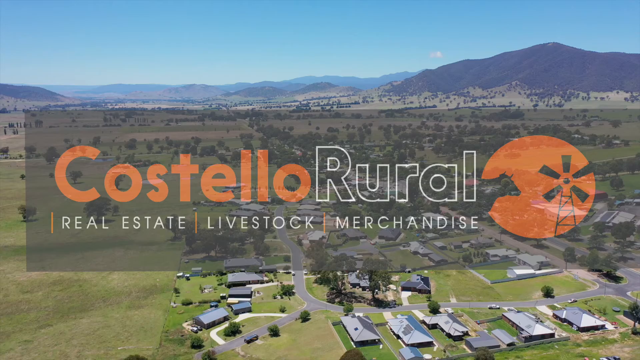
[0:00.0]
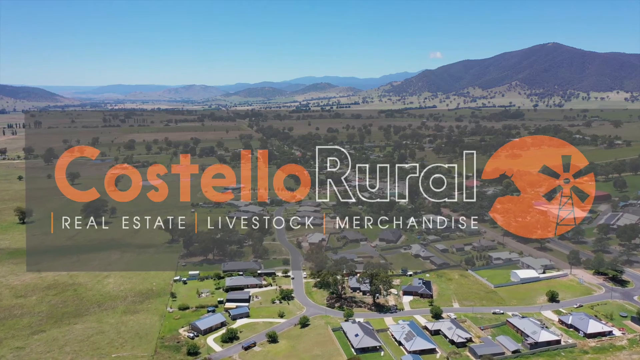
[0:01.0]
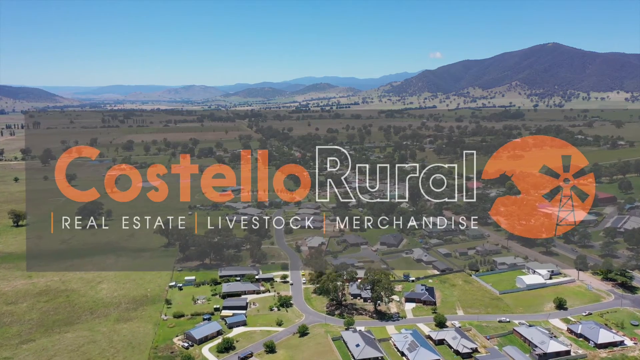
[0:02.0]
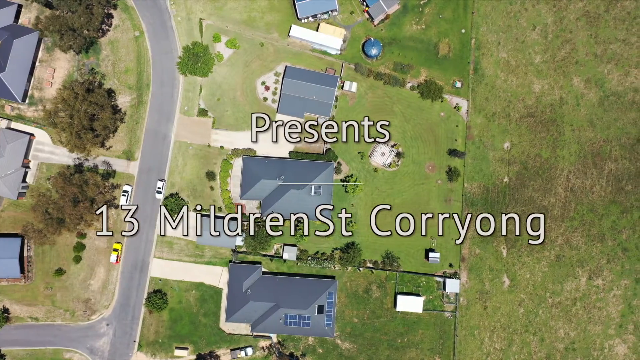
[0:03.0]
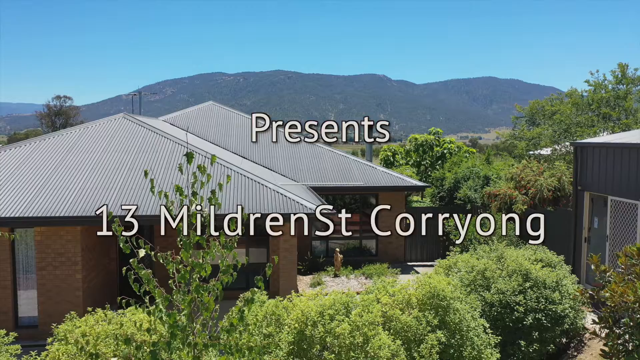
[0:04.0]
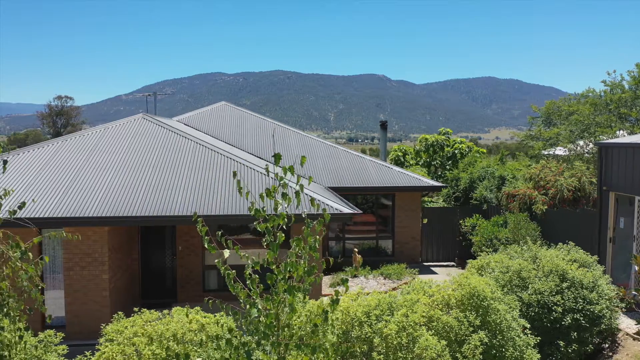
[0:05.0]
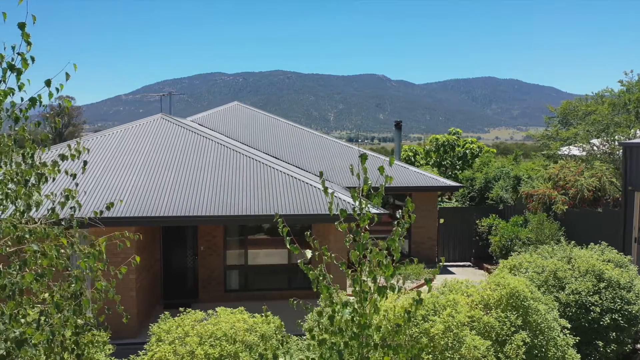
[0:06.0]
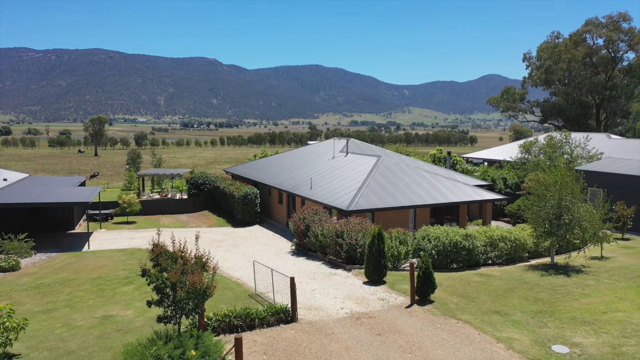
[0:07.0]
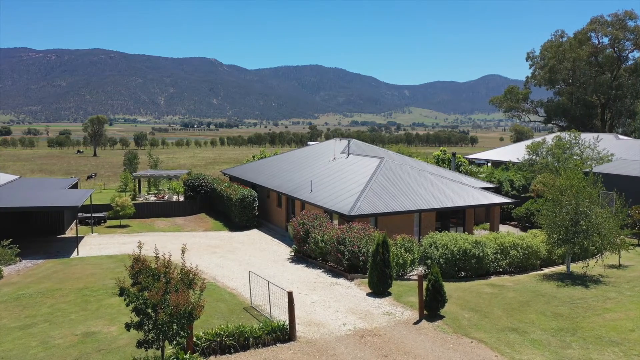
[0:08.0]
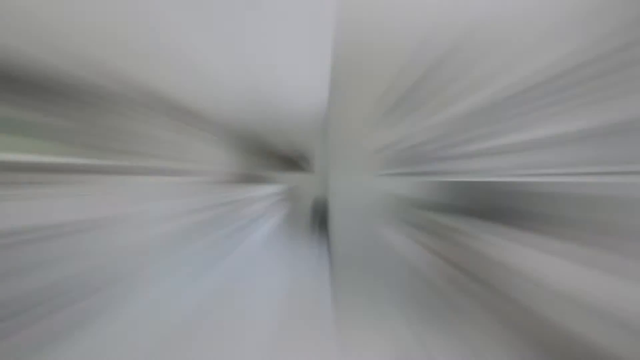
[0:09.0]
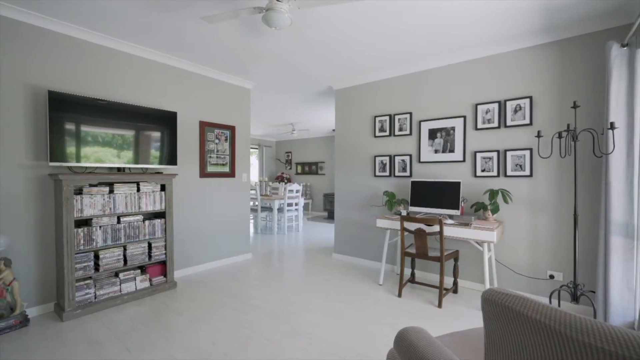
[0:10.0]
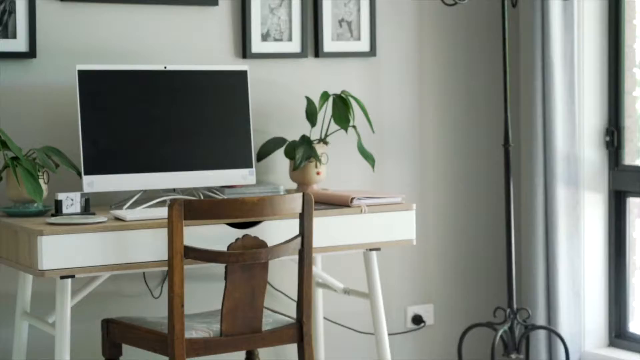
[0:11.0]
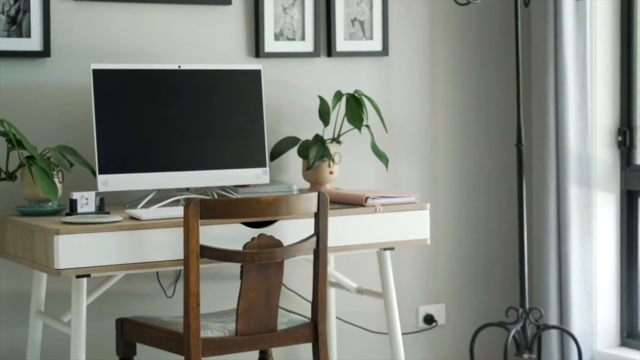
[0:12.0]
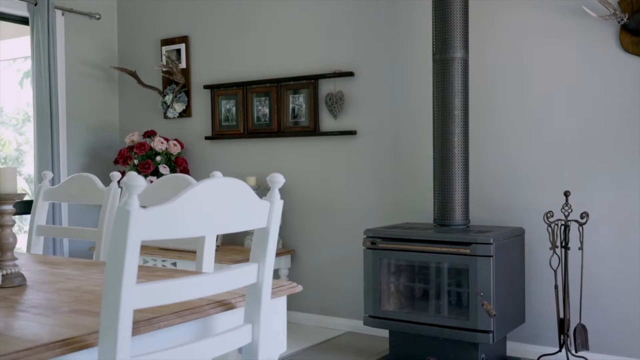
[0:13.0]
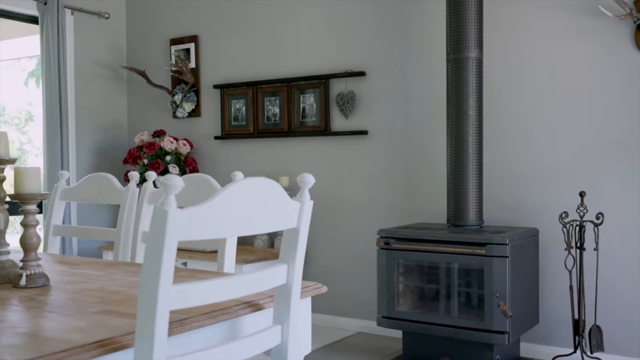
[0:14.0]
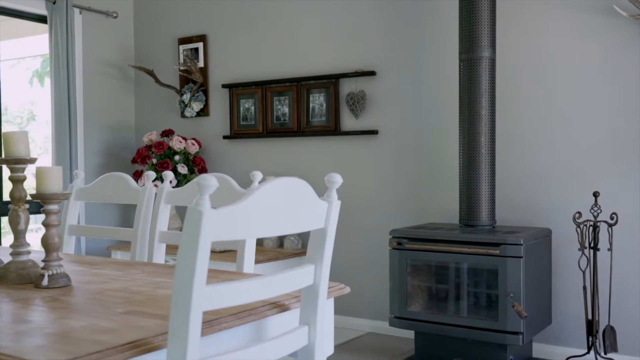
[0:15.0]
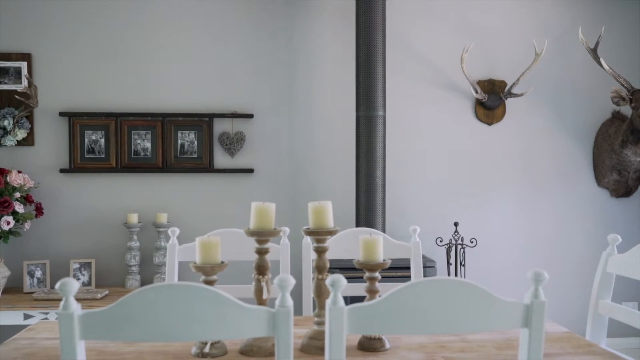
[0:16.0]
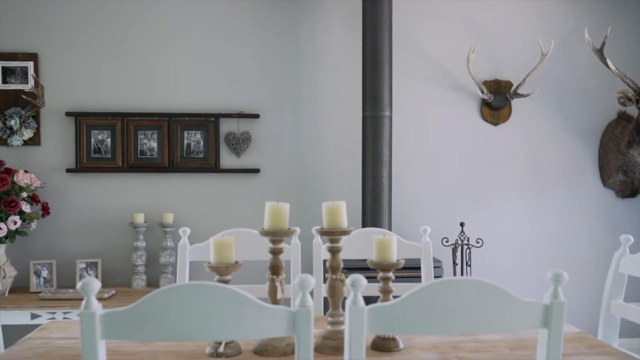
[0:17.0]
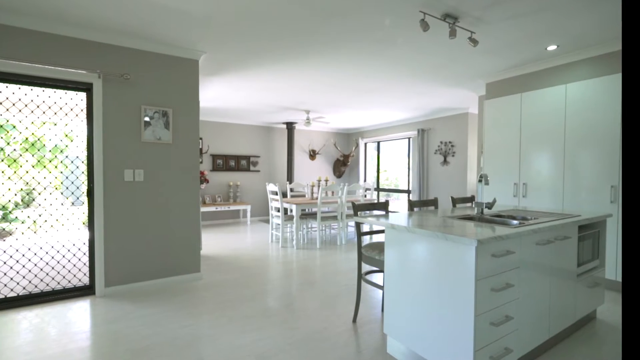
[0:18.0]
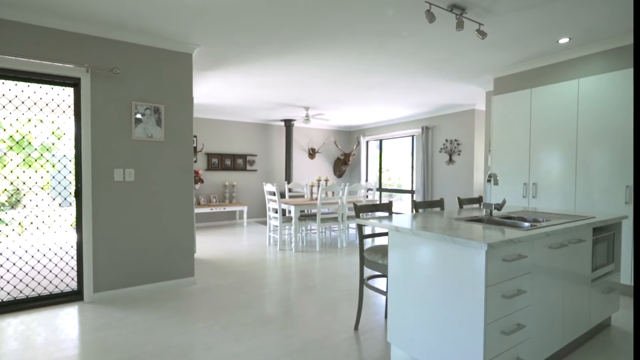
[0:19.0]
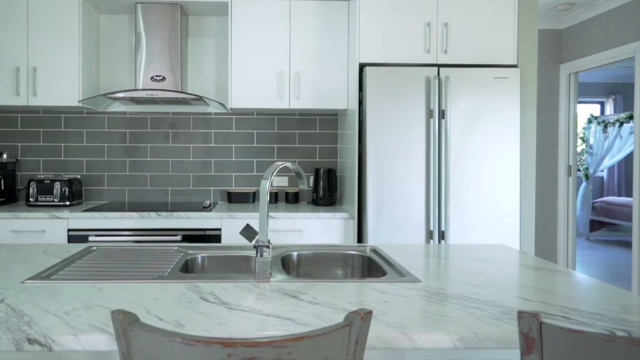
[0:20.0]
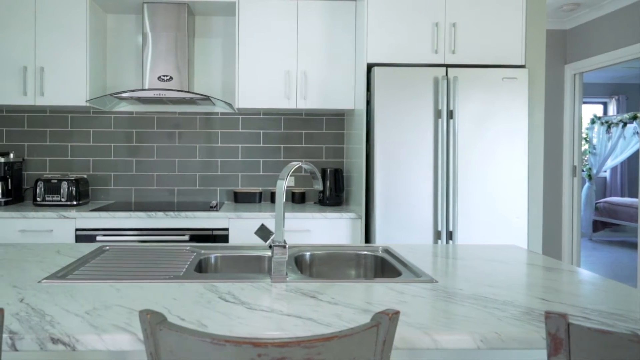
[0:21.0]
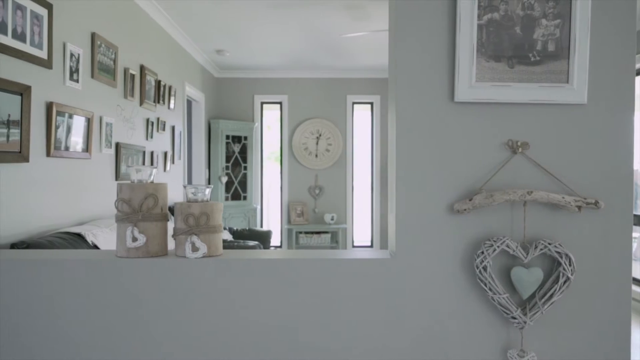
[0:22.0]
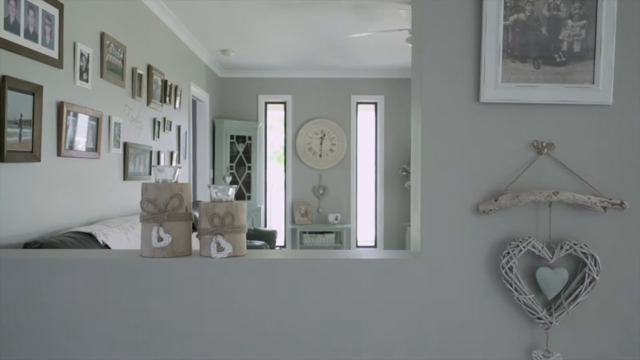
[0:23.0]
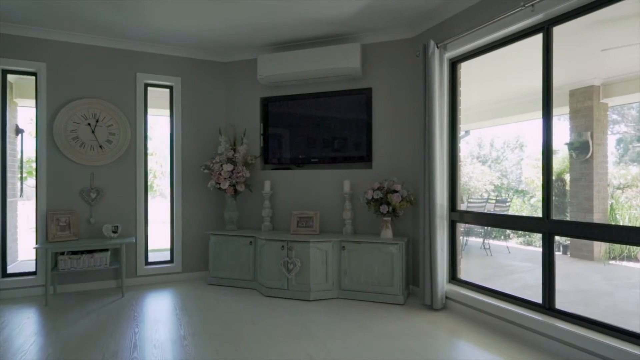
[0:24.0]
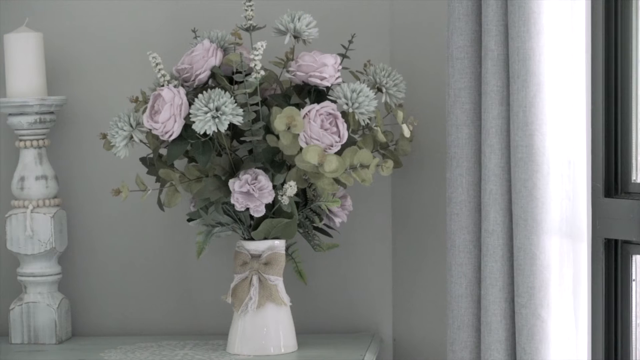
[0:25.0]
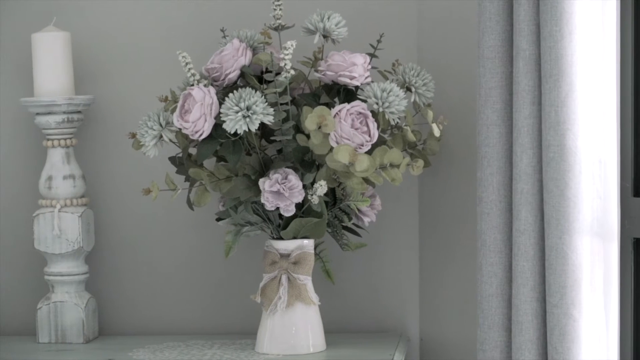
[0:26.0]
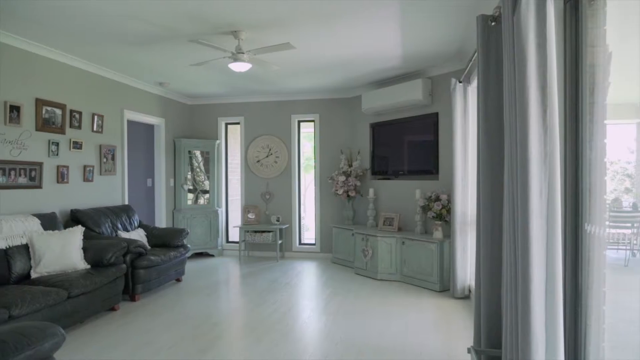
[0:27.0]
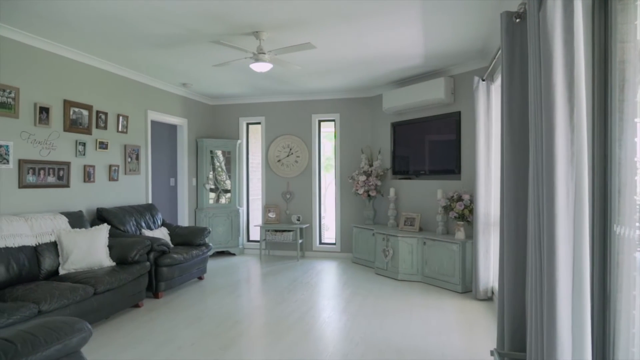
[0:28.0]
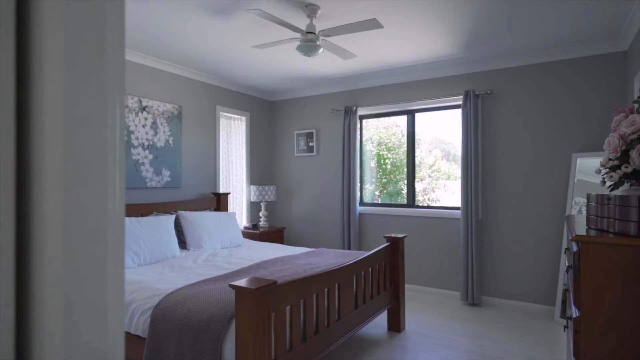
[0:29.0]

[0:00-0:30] The video opens with the title "Costello Rural, Real Estate, Livestock, Merchandise" and a logo of a cow and a windmill. What seems to be a drone shot shows a wide area with a lot of housing, and green, quite mountainous land stretching to the horizon under a clear sky. The view swaps to a top-view shot with the text "presents 13 Mildred Street, Corryong". Another drone shot follows, apparently of the front facade of the house, which has a triangular ceiling that is black and shiny; the outer walls seem to be a warm beige colour. The video then swaps to what looks like the inside of the house, the living room area, with grey walls. To the right, many picture frames are on the wall, with a little desk below them holding a computer and a little wooden chair. A TV is on top of a grey bookshelf filled with books, and there is a sitting area. The shot starts focusing on the desk with the computer.